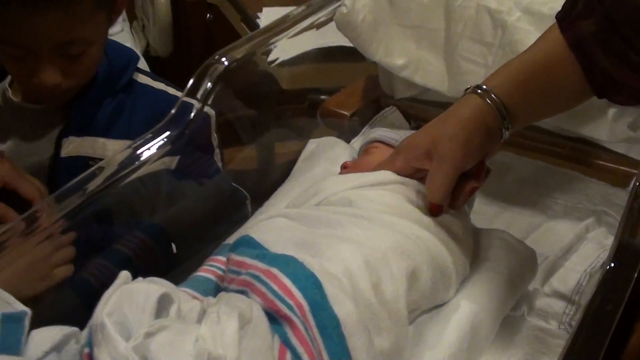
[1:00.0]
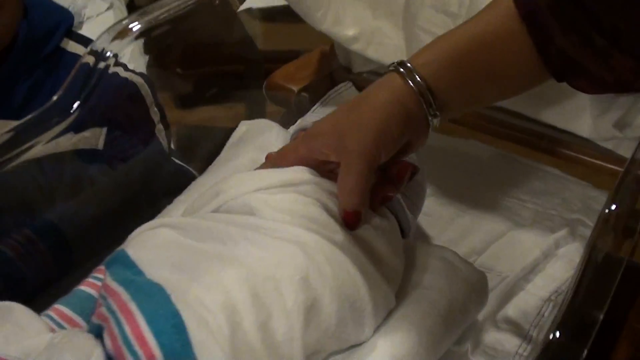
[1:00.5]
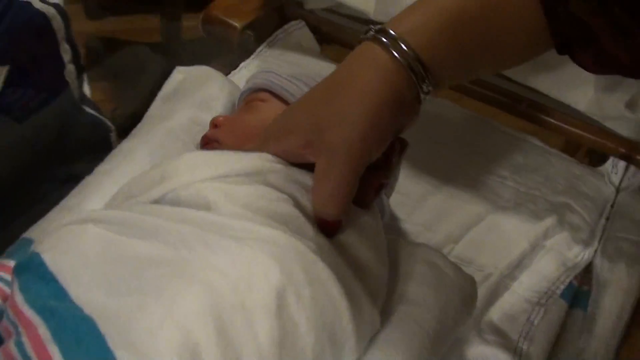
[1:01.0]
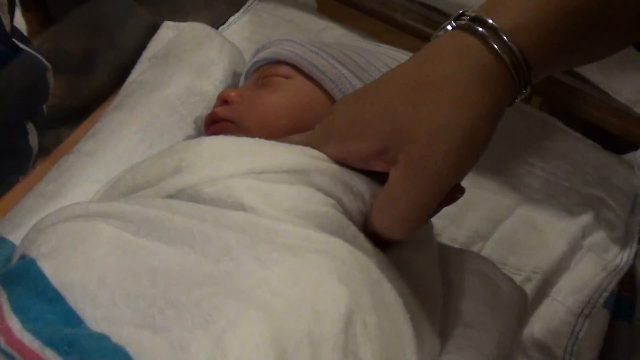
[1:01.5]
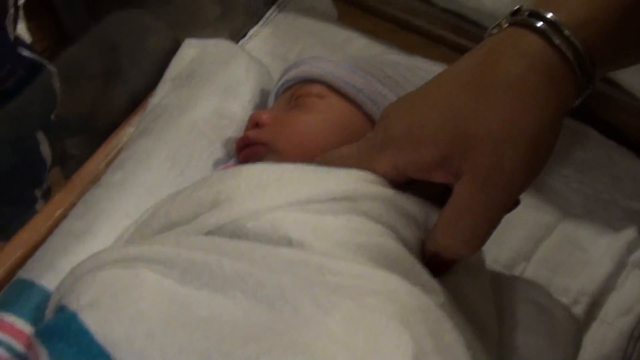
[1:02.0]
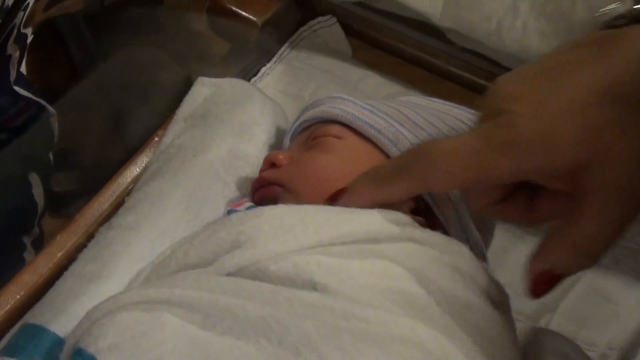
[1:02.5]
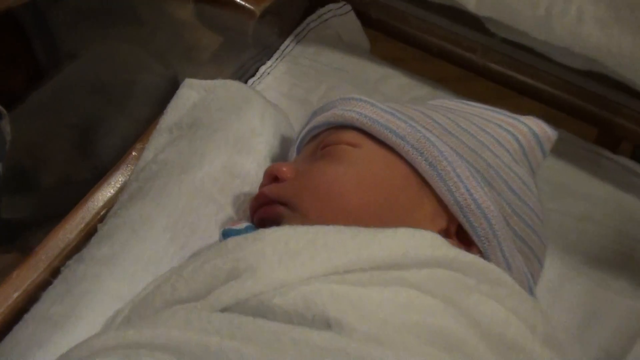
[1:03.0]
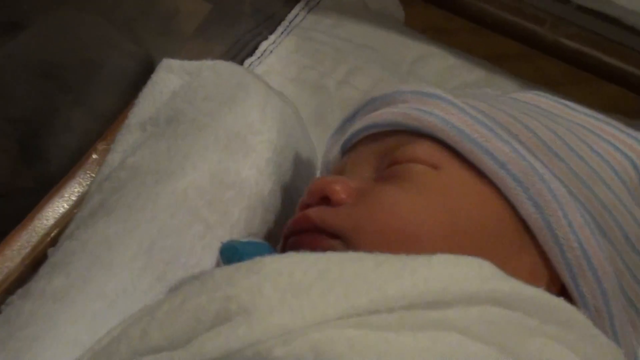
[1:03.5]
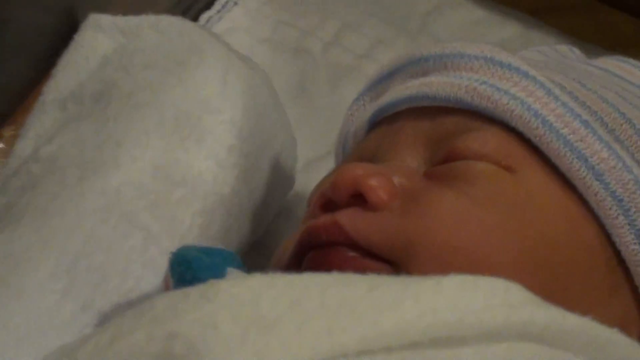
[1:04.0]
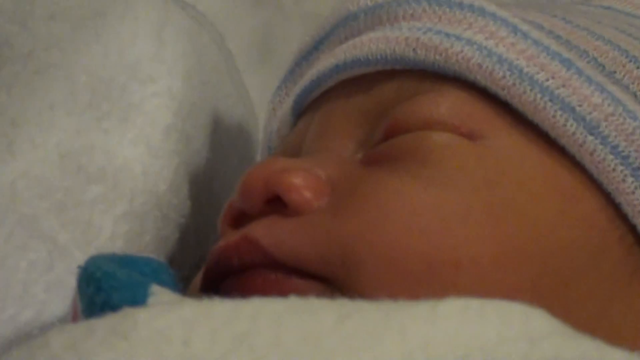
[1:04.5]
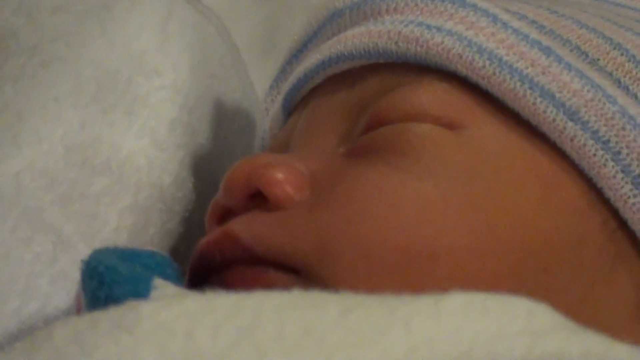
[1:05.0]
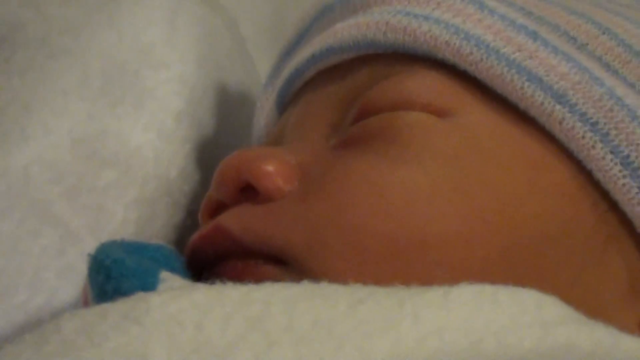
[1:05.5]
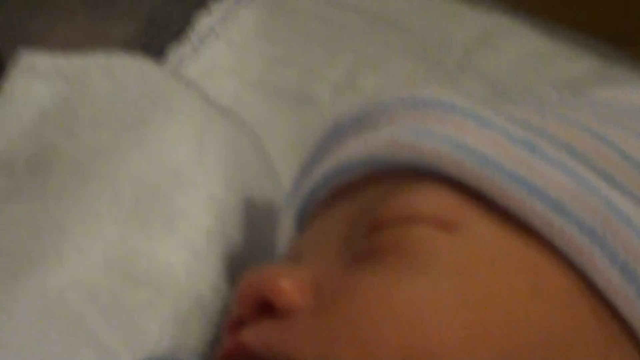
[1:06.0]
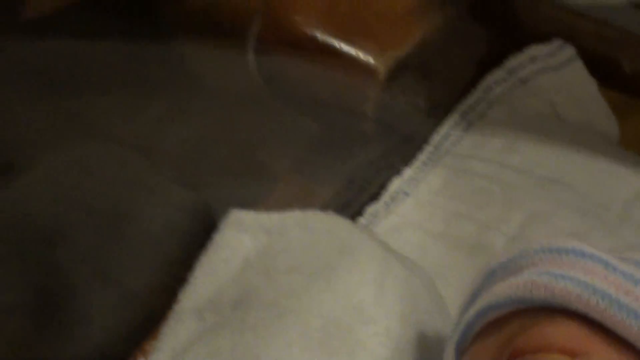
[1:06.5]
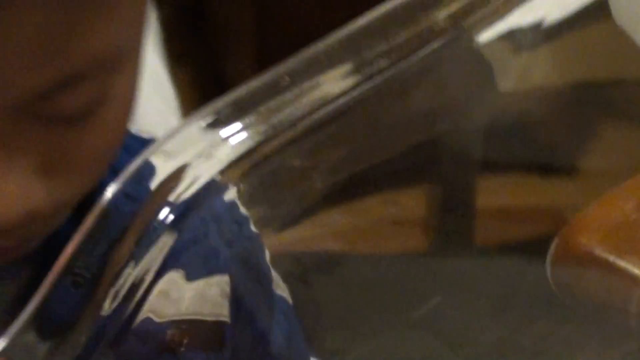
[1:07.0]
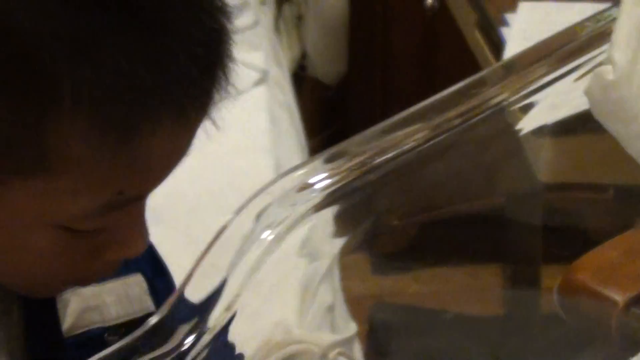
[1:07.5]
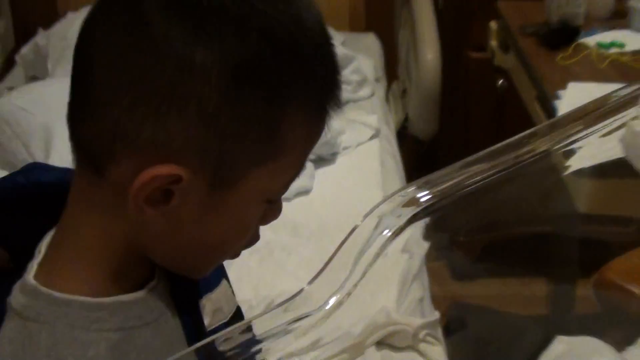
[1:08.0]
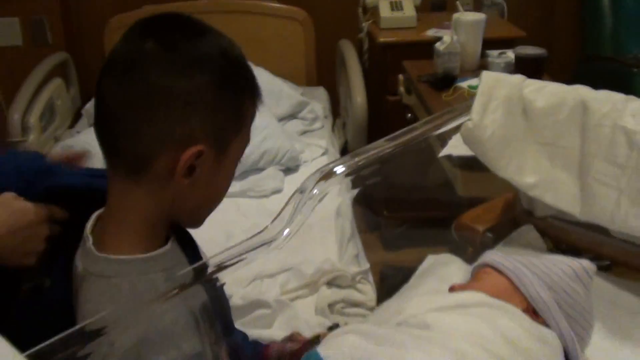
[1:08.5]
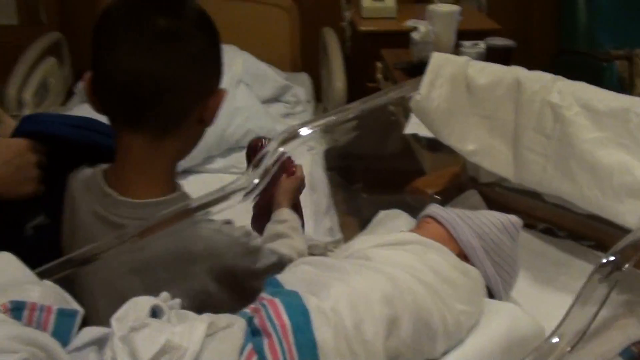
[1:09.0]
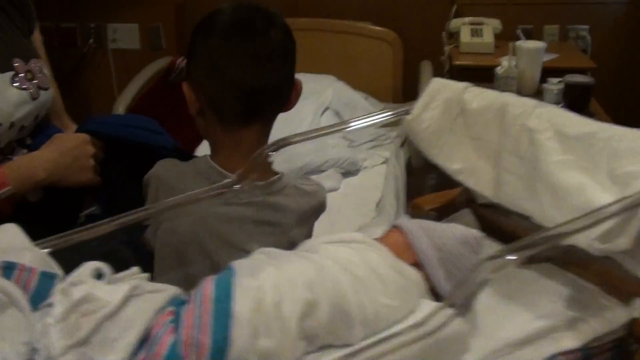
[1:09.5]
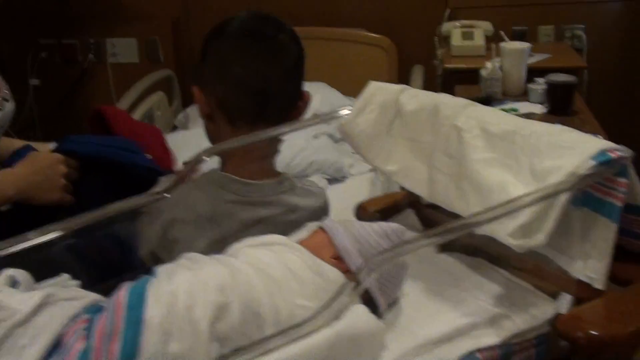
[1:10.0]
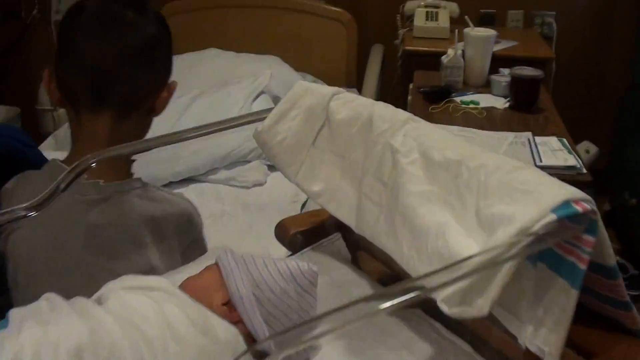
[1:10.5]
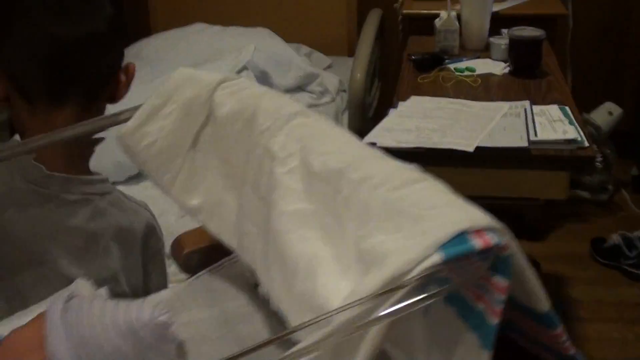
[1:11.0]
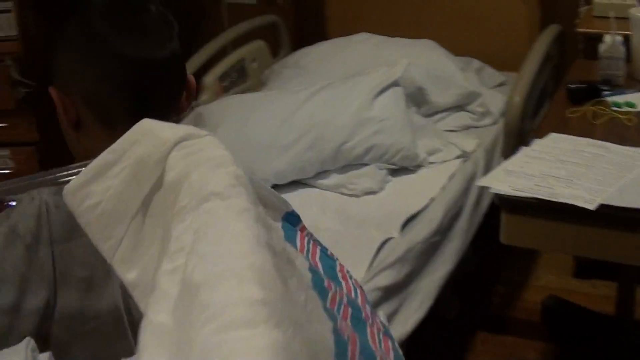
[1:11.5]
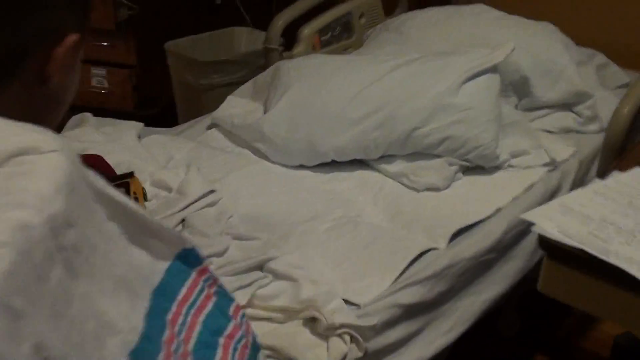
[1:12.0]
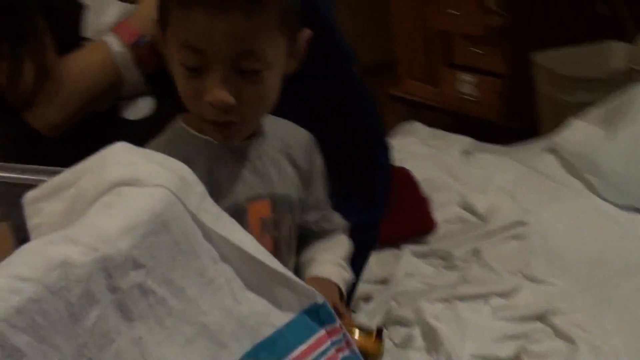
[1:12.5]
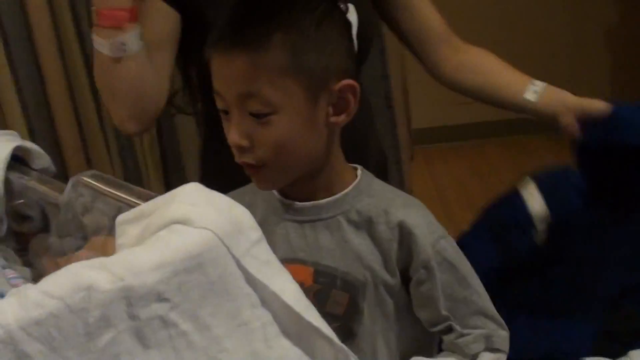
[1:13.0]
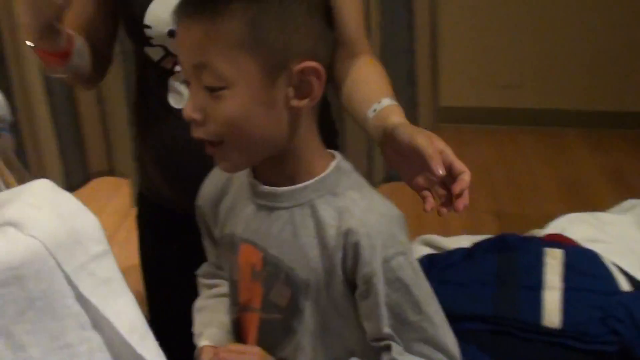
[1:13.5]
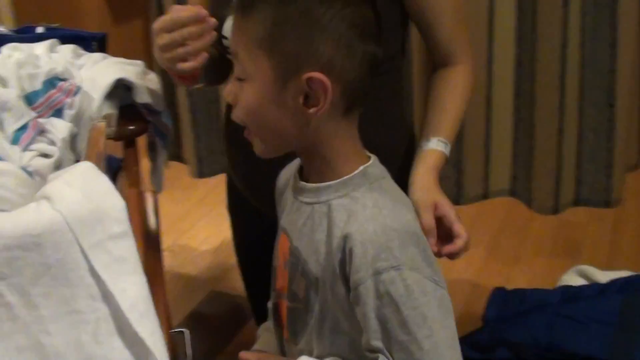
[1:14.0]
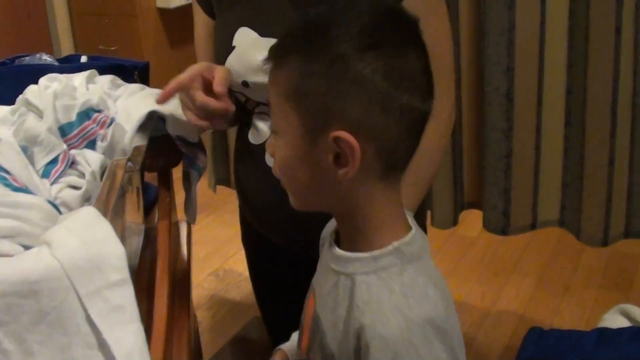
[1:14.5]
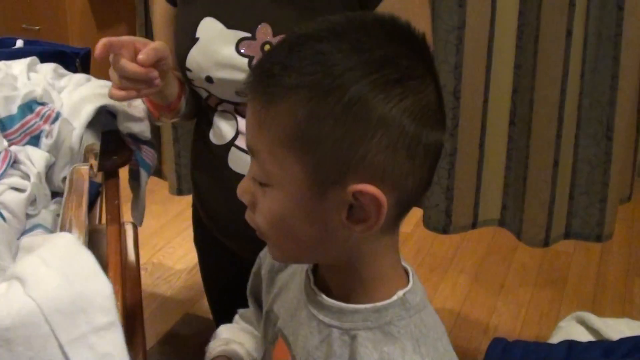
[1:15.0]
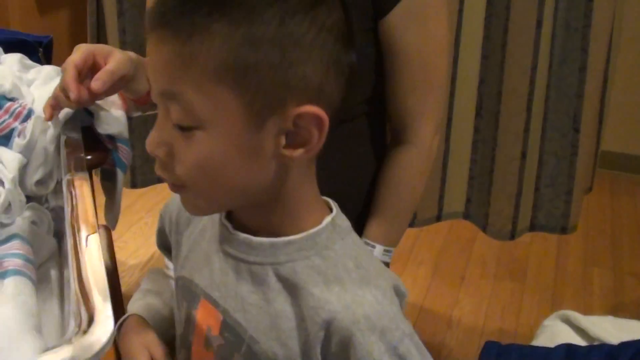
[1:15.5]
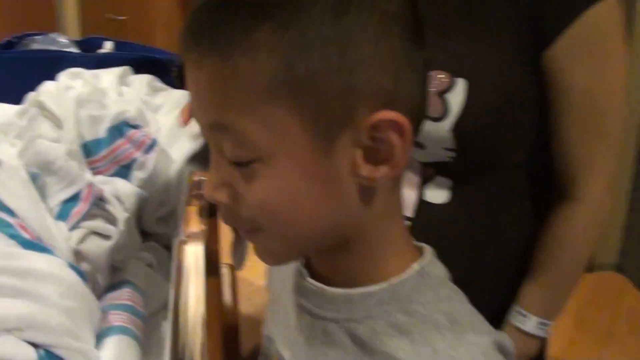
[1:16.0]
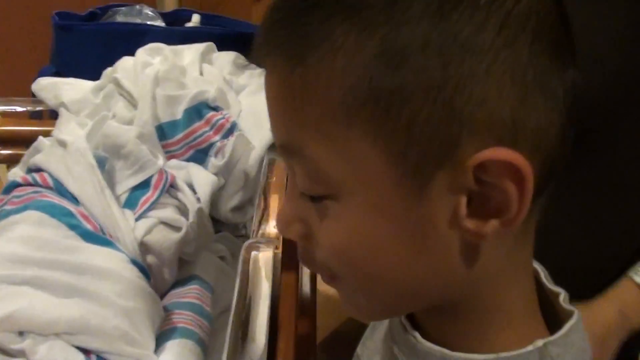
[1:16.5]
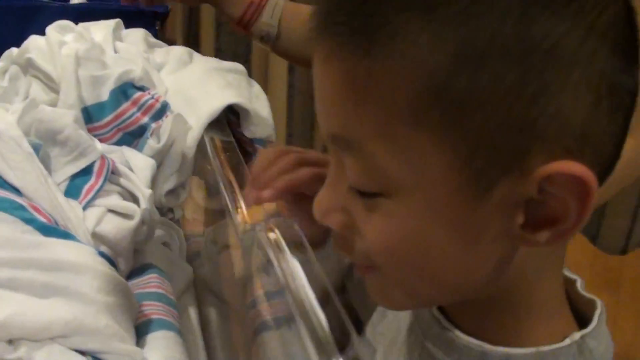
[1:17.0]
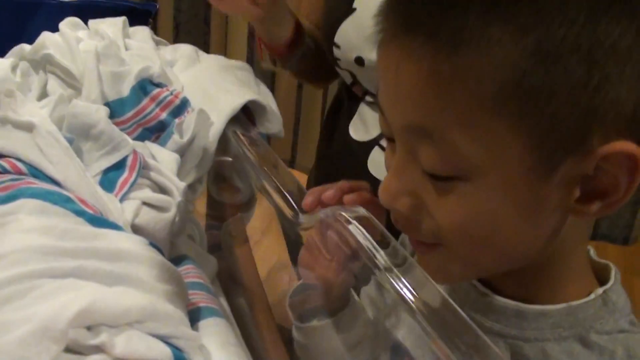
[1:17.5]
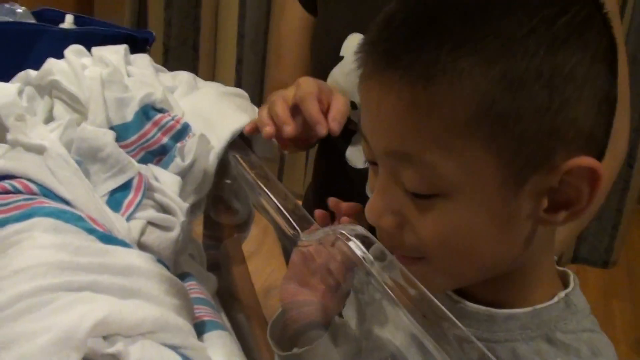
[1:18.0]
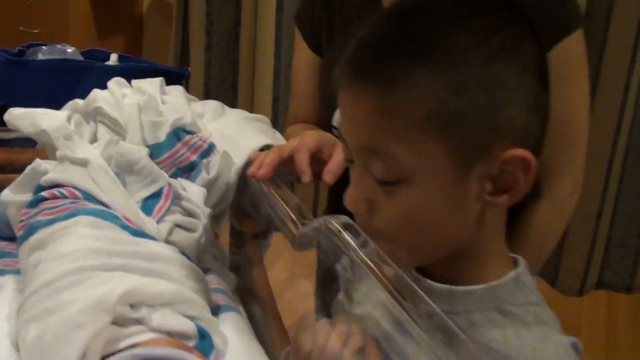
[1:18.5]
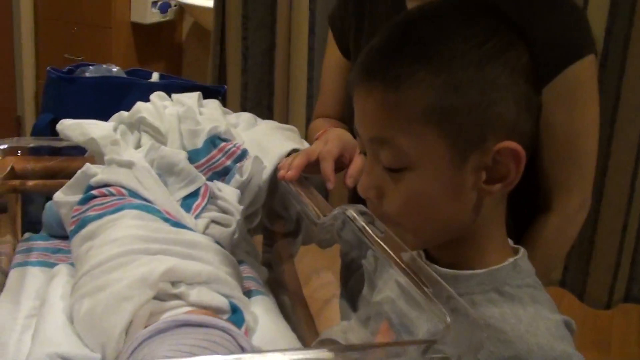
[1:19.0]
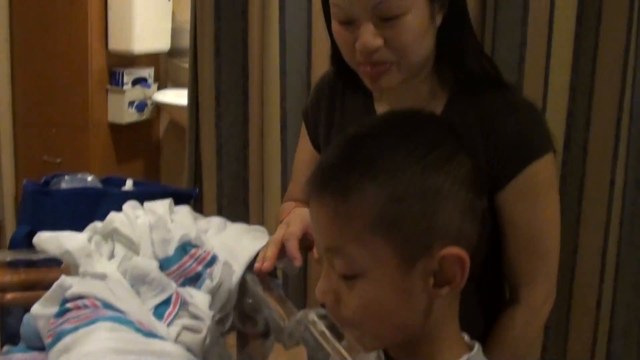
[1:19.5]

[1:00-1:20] The older woman has her hand on the baby, her finger down by the baby's neck. She wears red nail polish and a silver bangle bracelet. She touches the baby and points at something on the baby's face, then takes her hand away, and the camera zooms in close to the baby's face. The baby is sleeping but moving its head a little, and wears a pink, blue and white striped hat. The view moves back up to the little boy, whose mother helps him take off his coat, one sleeve and then the other, and puts the coat on the bed. He wears a long-sleeve gray t-shirt. With the coat off, he approaches the bassinet again. The mother points down at the baby while he puts his hand on the side of the bassinet and looks down. She gestures to the baby and seems to be talking about it, and both look down at the baby in the bassinet.